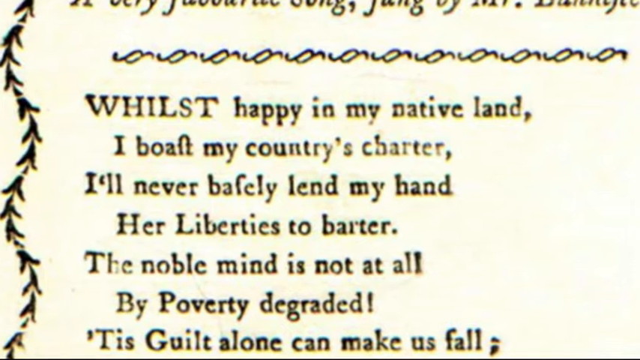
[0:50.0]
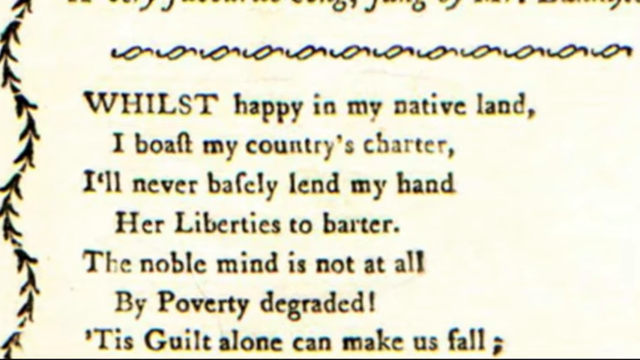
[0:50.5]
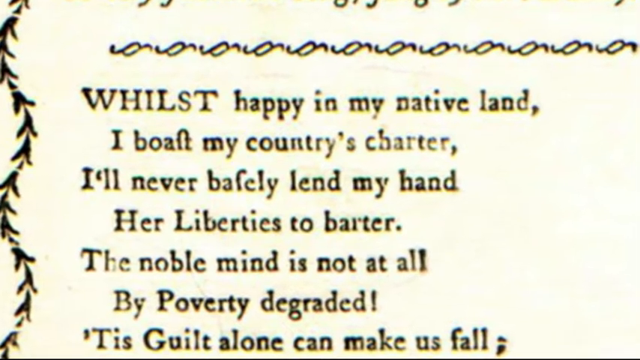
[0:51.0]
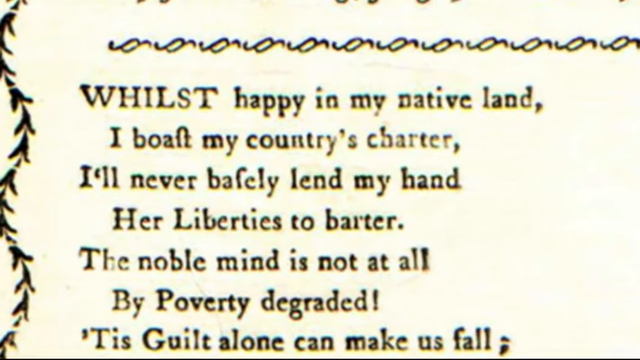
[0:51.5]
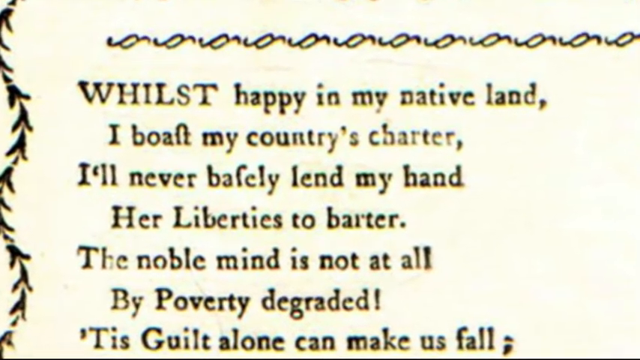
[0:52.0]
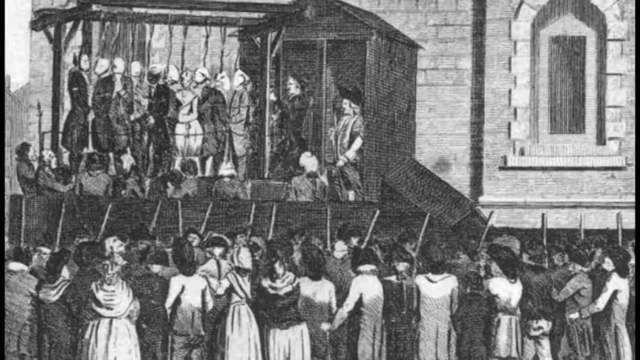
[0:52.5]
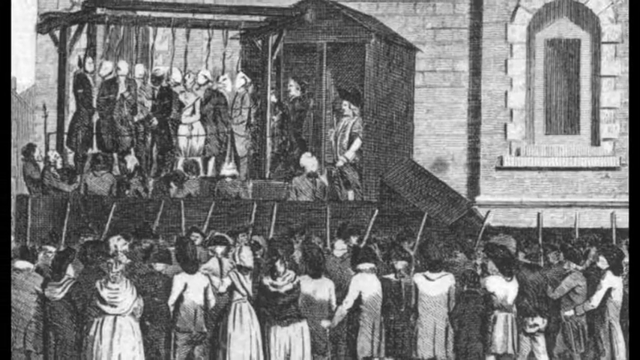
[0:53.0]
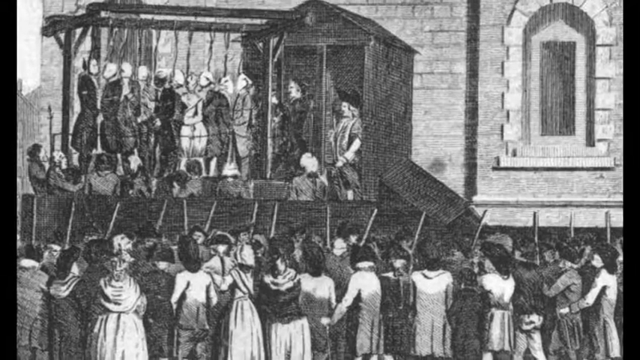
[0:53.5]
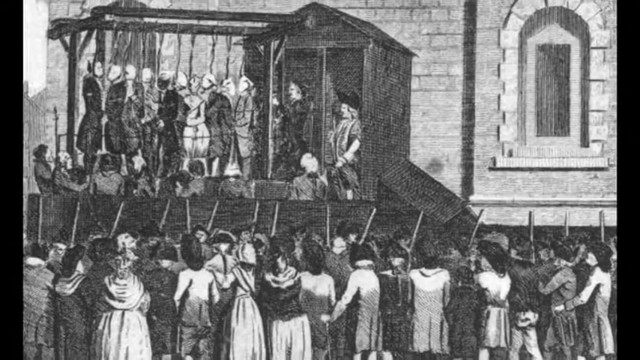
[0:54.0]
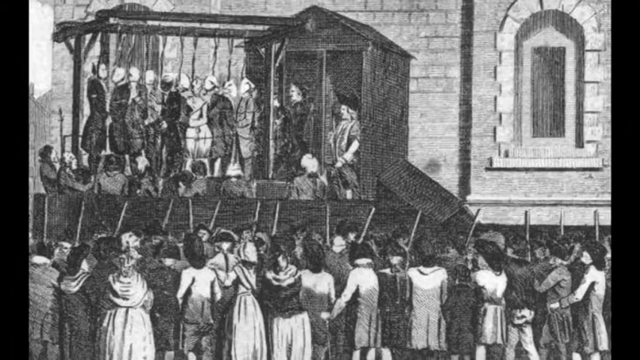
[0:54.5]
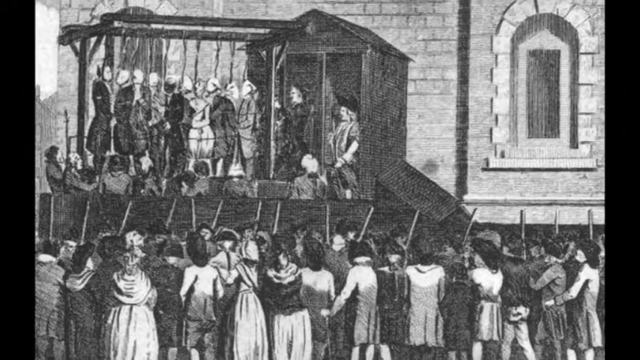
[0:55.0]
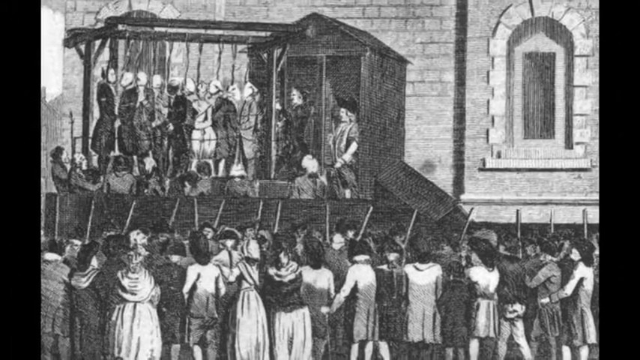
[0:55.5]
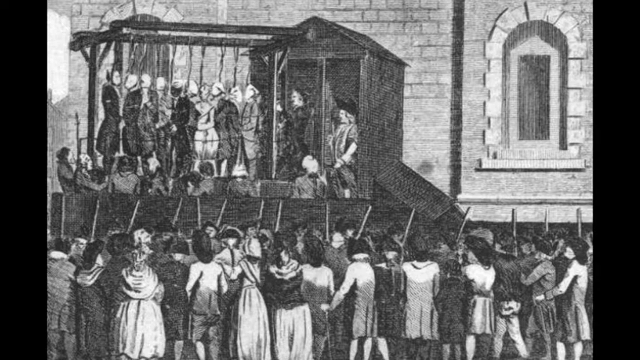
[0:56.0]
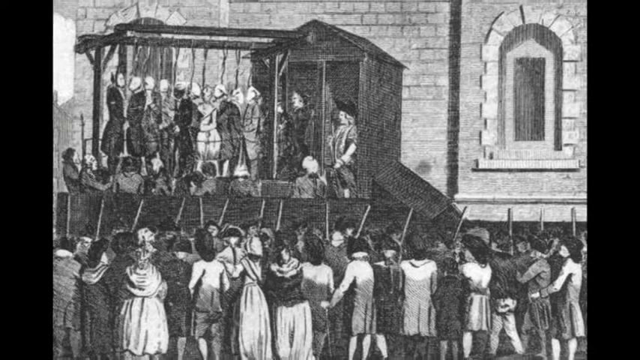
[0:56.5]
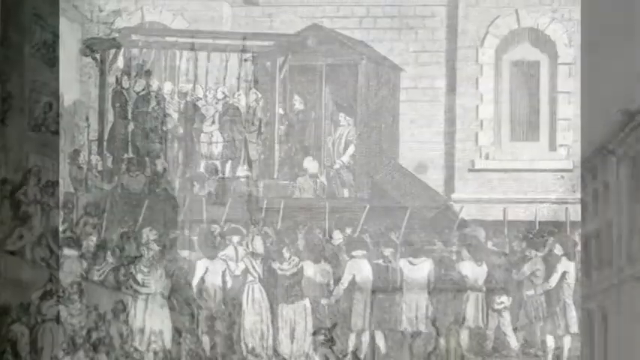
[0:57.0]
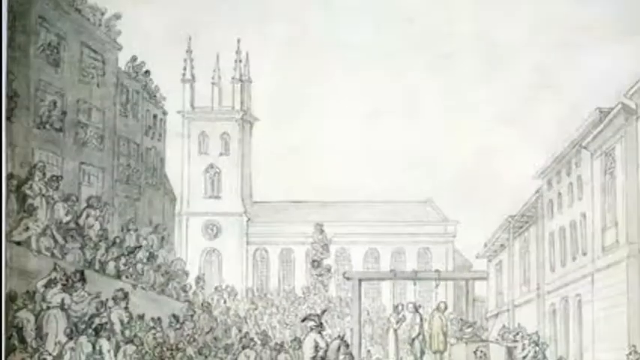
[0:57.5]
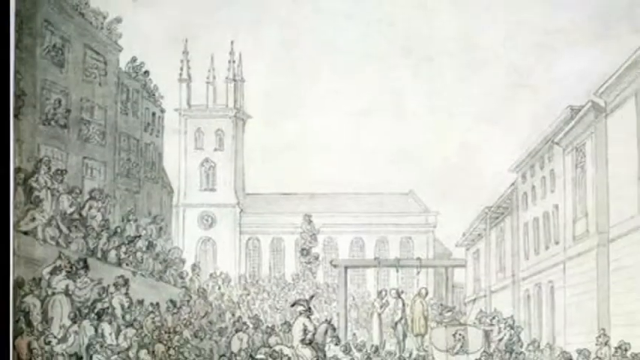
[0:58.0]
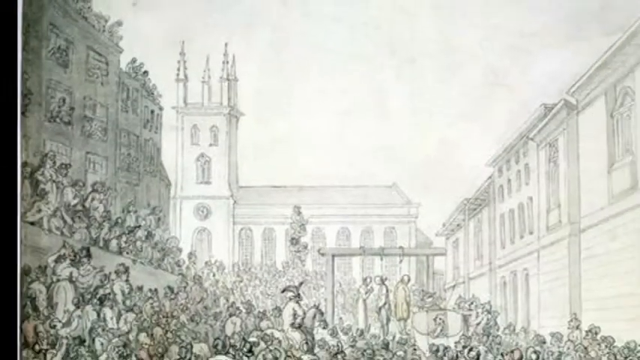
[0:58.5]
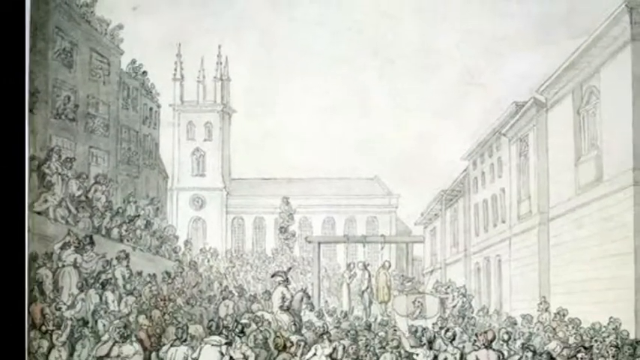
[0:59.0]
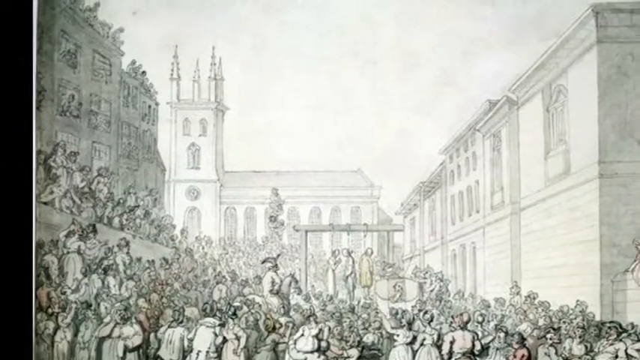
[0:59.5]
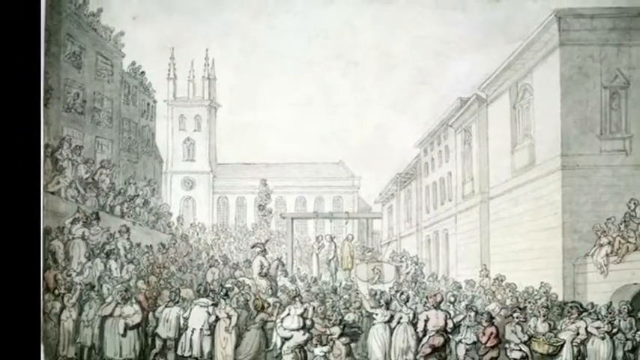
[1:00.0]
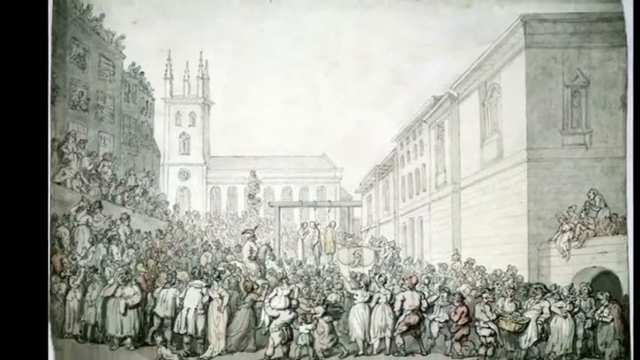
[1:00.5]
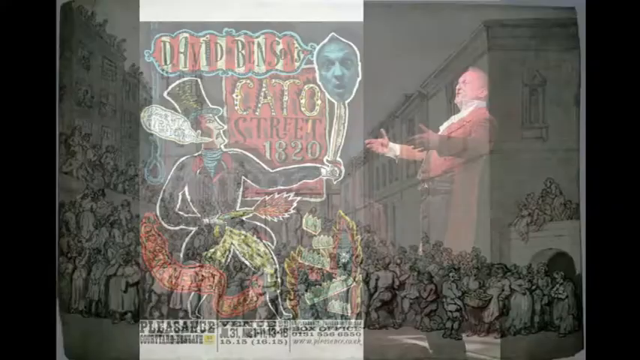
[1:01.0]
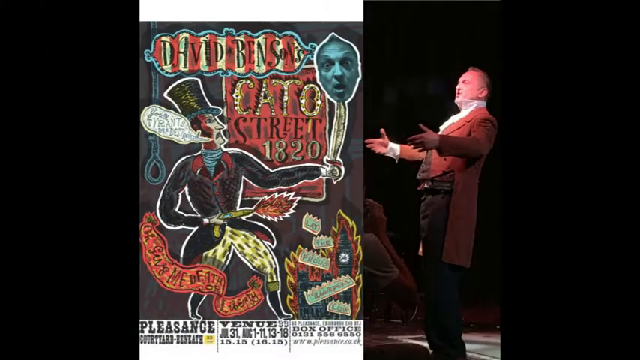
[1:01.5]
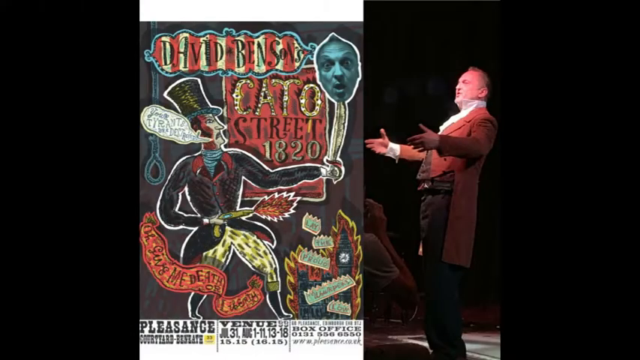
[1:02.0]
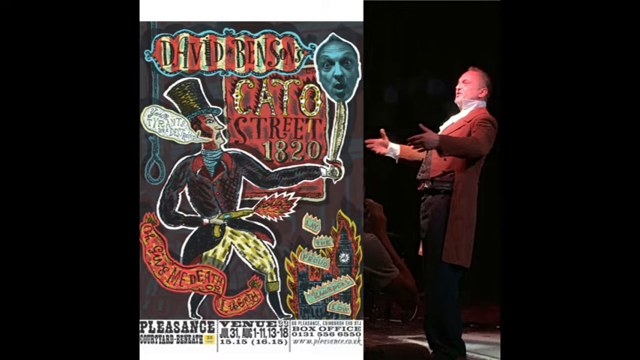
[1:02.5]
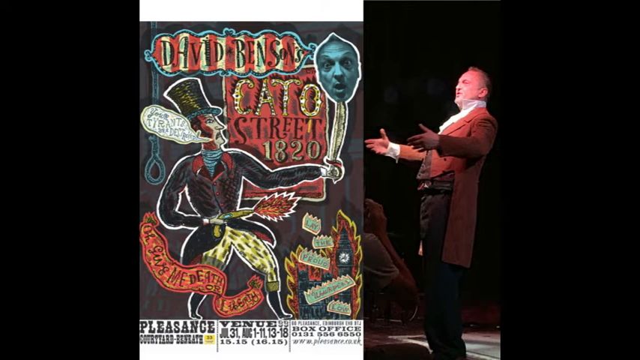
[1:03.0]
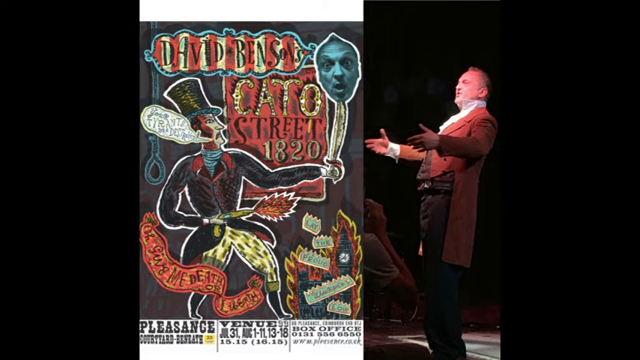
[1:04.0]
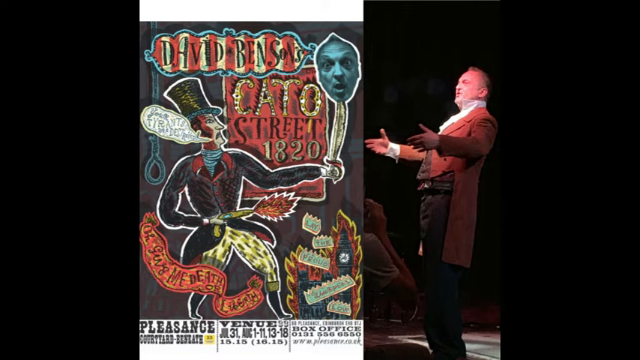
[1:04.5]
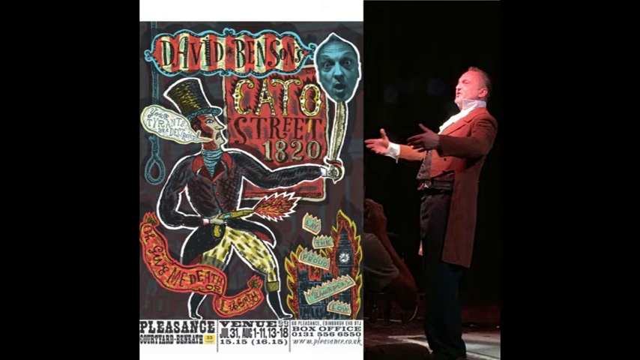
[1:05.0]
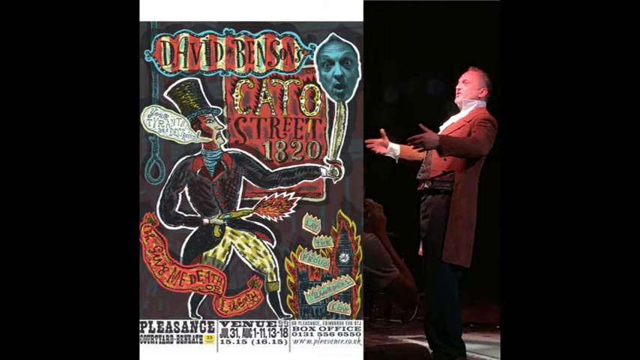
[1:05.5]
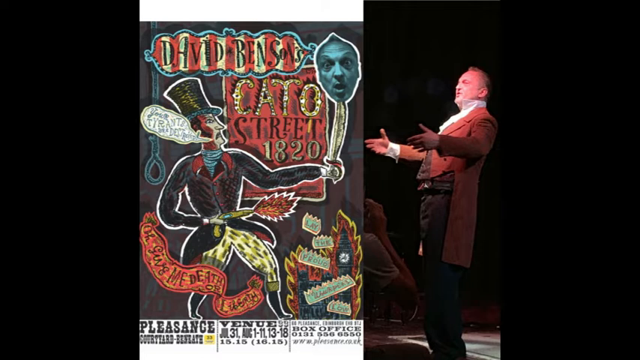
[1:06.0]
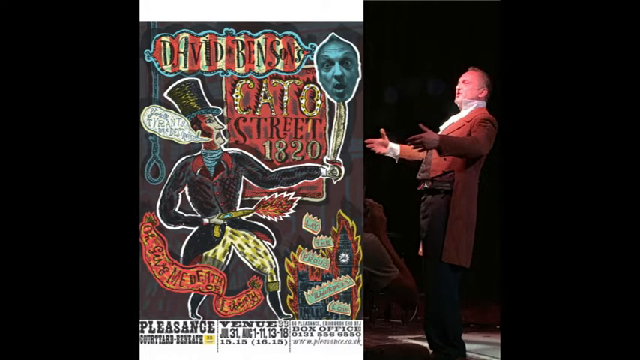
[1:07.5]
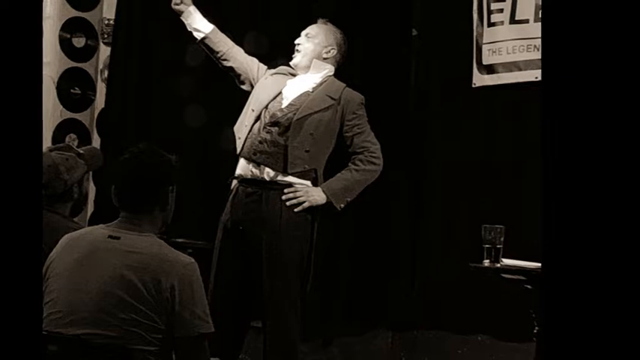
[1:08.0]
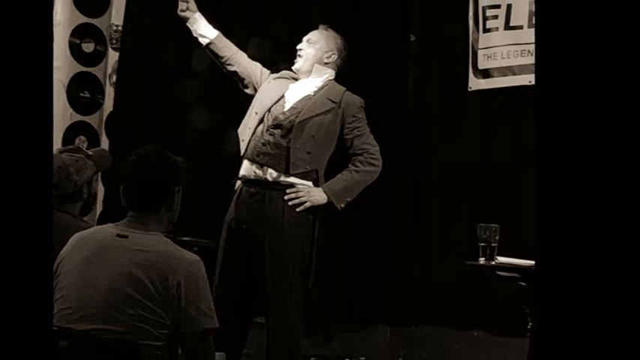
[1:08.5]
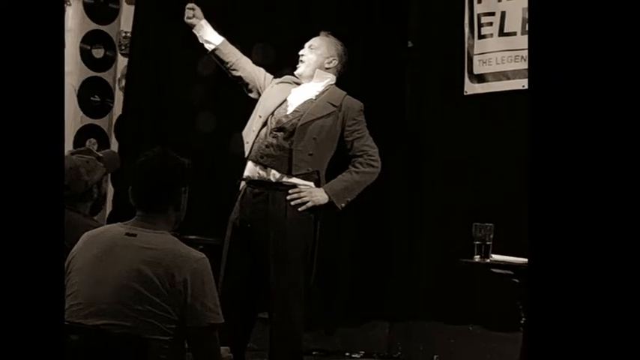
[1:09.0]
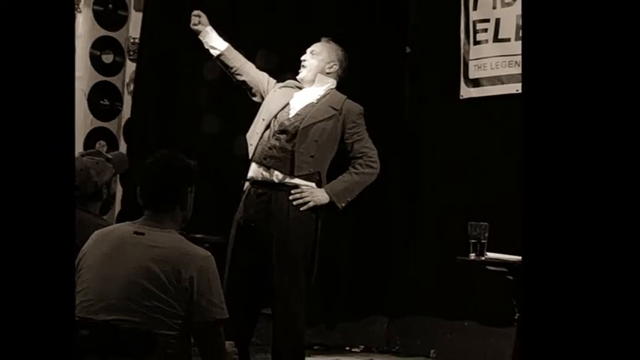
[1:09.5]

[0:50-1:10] The camera stays on the song lyrics, which include "Whilst happy in my native land, I vote my country's charter" and "The noble mind is not at all by poverty degraded, his guilt alone can make us fall", where the visible lyrics end. The scene changes to a black-and-white pencil drawing. In the top half, there appear to be a number of people being hung by the neck on some type of devices, while in the bottom half a crowd of men and women looks on. Directly to the right of the people being hung, two older men are also looking on very closely. Stone buildings are in the background. The scene changes to another, similar drawing: in the direct middle, three people are being hung on a pillar-like area, with many onlookers surrounding it, both on the ground and through their windows on the left and right. There are three buildings in total. The scene then changes to a man on the right with the same poster seen earlier featuring the name David Benson. The man has white skin, wears a red jacket, has his arms open as if going for a hug, and is looking to the left.